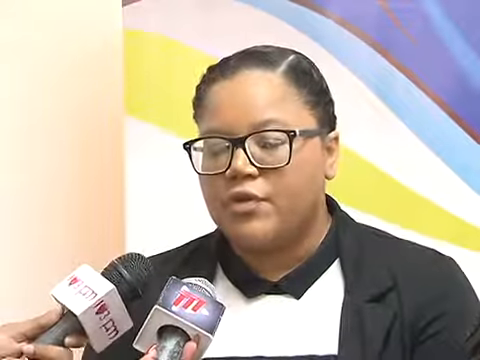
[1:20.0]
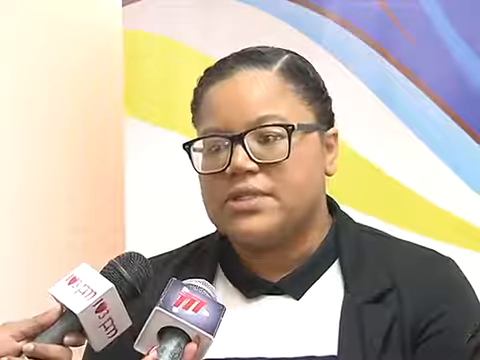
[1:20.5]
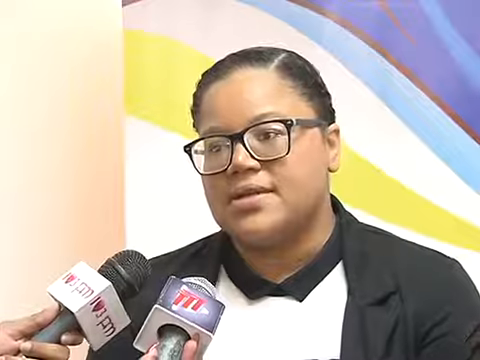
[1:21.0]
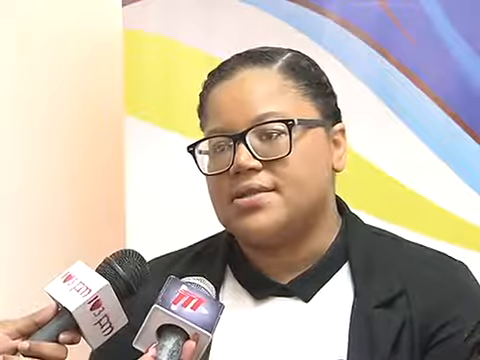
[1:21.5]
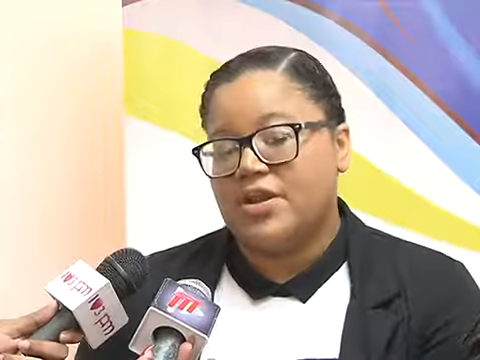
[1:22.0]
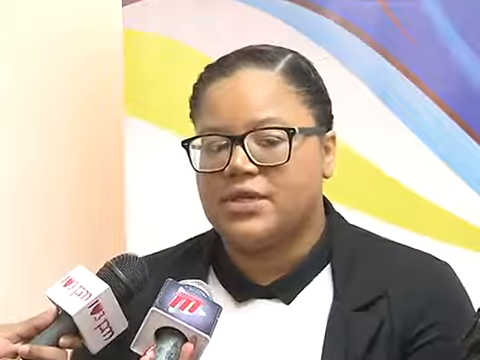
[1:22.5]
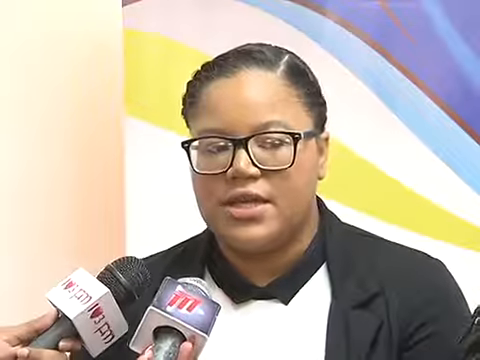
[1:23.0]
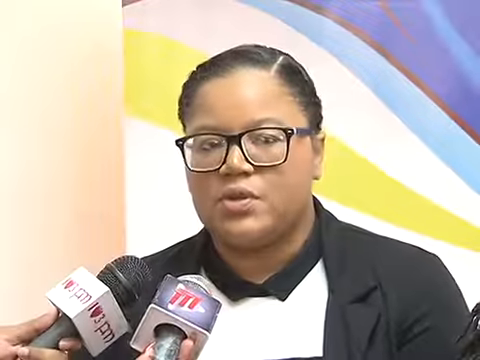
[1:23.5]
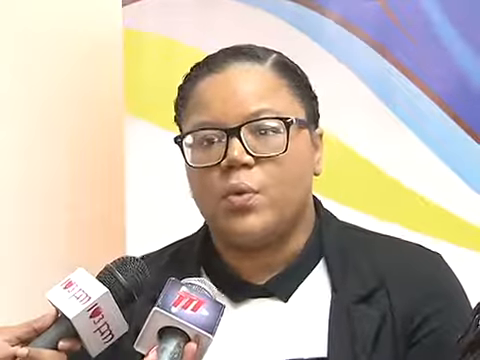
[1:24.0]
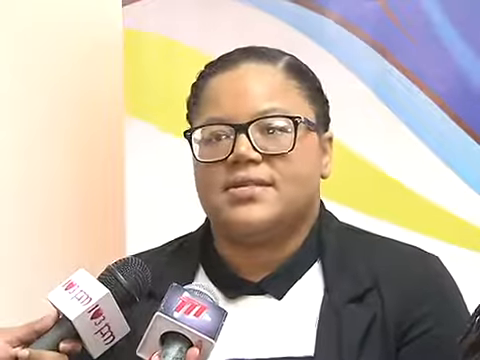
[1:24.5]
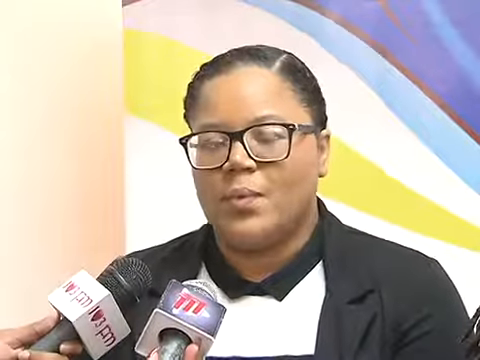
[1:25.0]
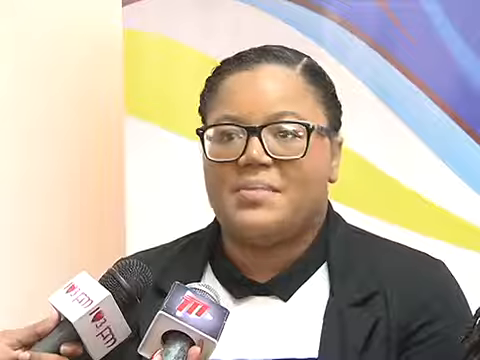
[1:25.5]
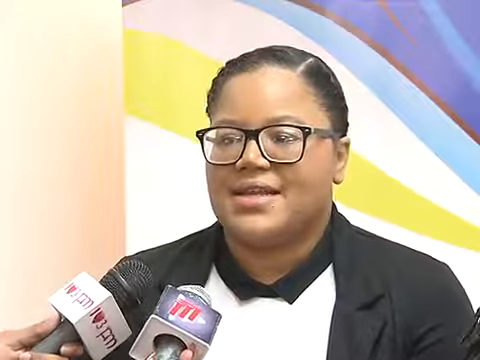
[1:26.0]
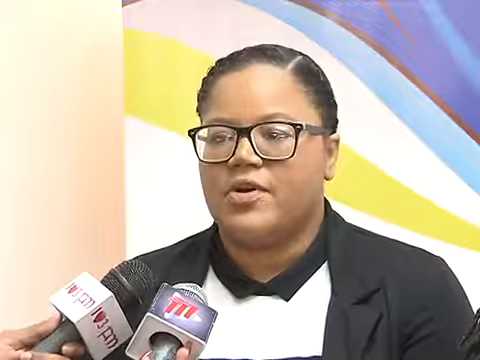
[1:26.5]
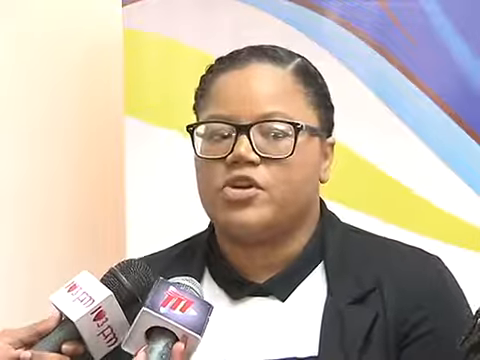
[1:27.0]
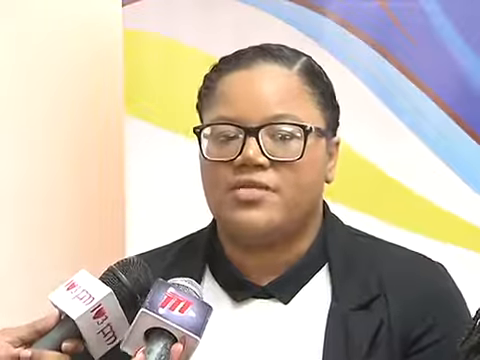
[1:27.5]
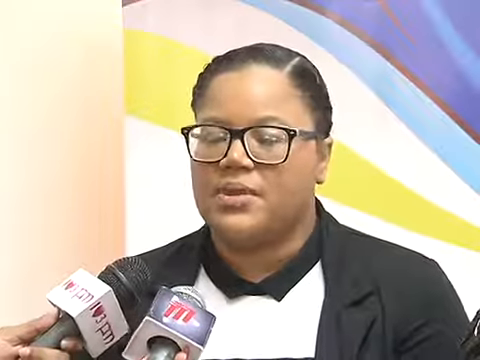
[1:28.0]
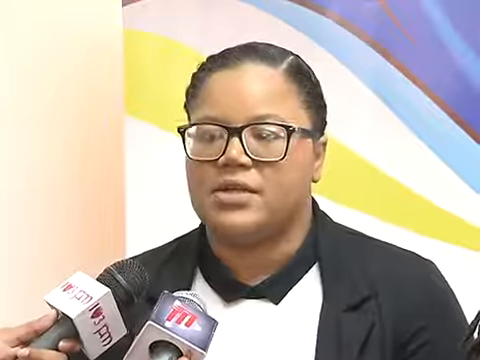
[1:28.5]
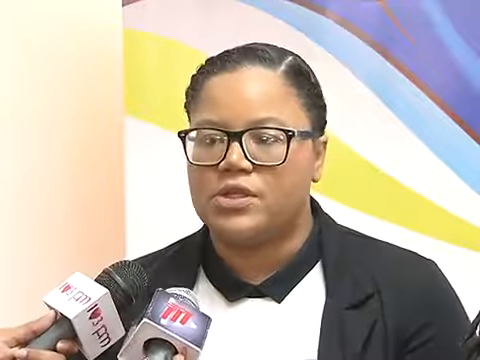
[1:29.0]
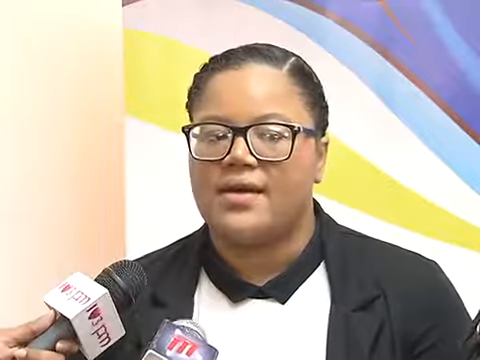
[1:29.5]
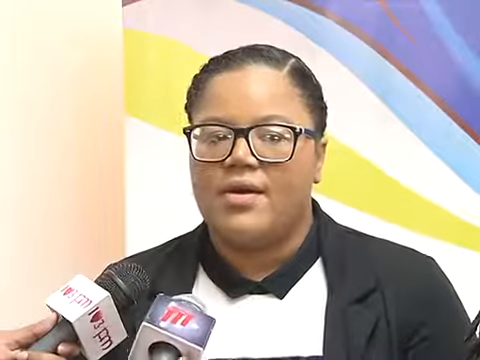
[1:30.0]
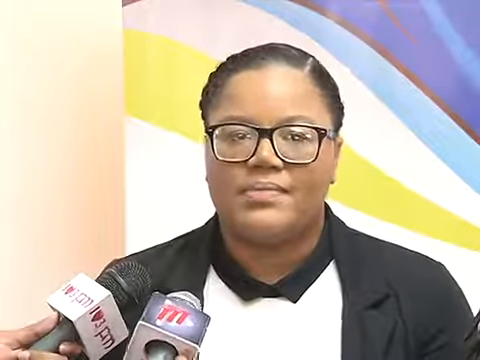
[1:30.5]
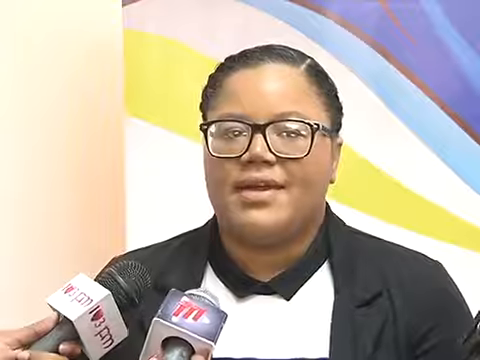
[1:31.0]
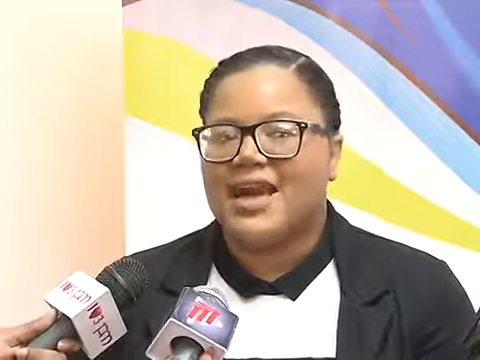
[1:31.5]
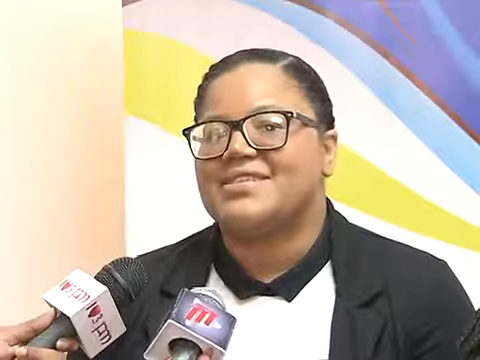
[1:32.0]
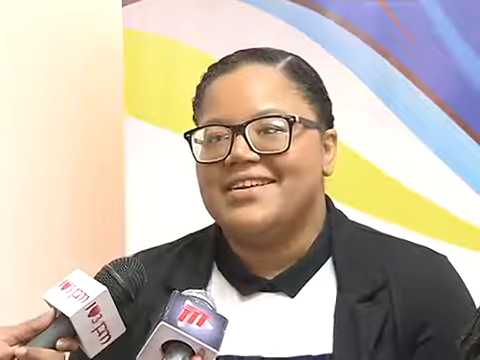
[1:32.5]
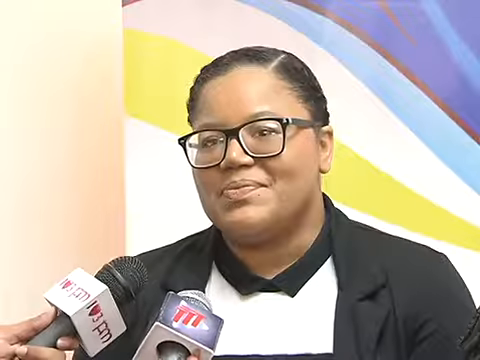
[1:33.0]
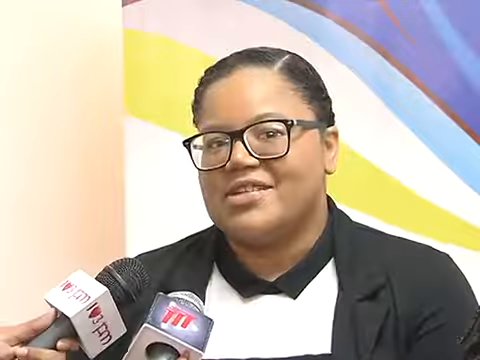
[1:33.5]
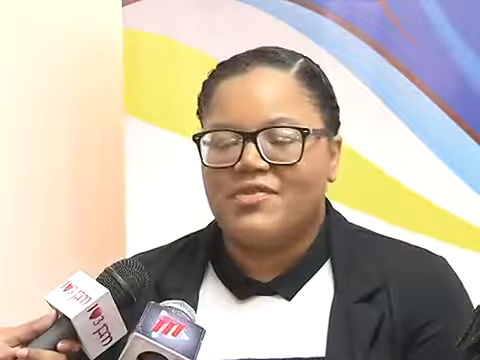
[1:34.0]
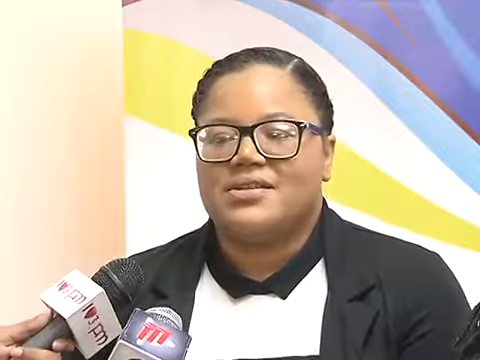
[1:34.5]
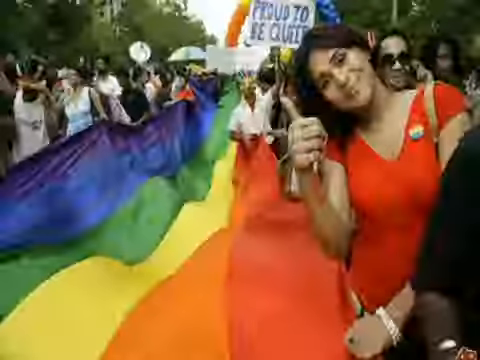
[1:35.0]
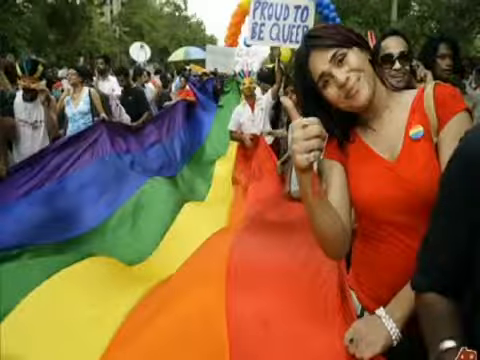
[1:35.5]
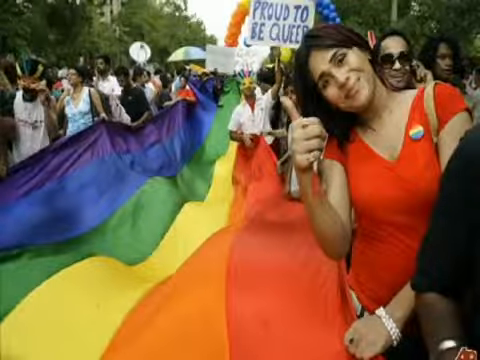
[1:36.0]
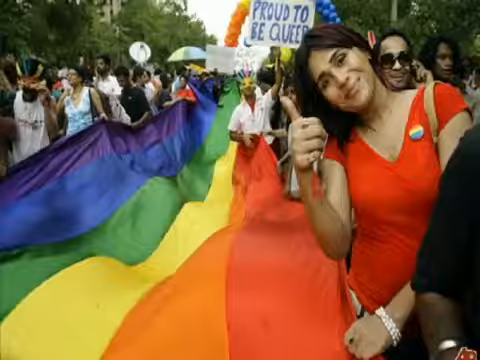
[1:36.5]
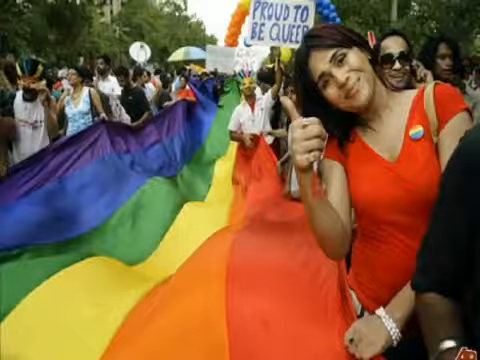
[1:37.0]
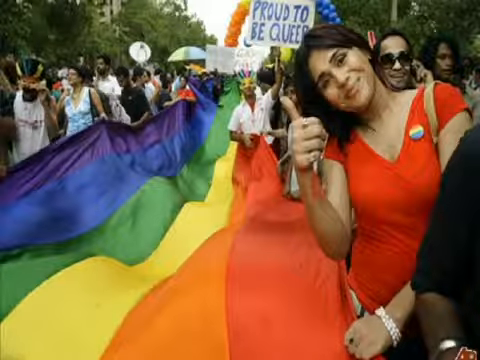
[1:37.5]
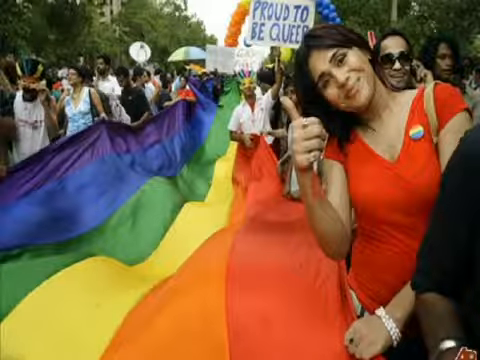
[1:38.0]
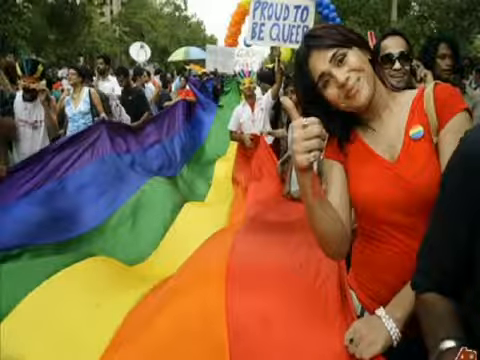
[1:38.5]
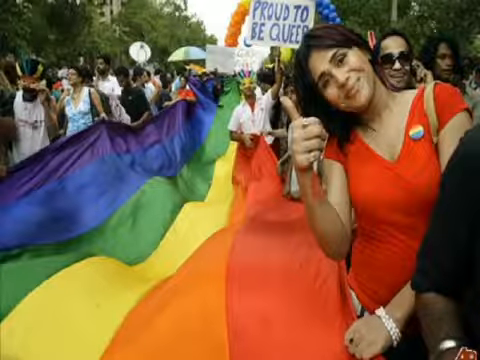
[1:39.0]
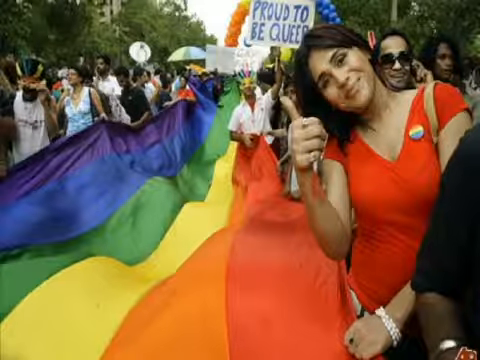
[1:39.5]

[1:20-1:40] A woman talks passionately into two microphones held by people who cannot be seen. She wears a black jacket and a white top with a black collar. The microphones have a Television Crew logo on the front, which is a little difficult to make out. In the background is a picture that looks modern, with white, yellow, pink and various blue stripes. At one point she smiles. Next comes a pride march, with a large rainbow flag held by a number of people in the crowd. In the foreground, a dark-haired lady in a red top with a pride badge smiles and gives a thumbs-up to the camera. Behind her stands a person in a mask and a white shirt holding a "proud to be queer" flag or placard, and a rainbow of balloons is in the background.